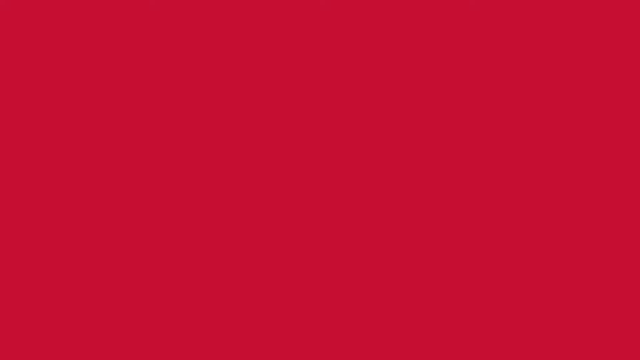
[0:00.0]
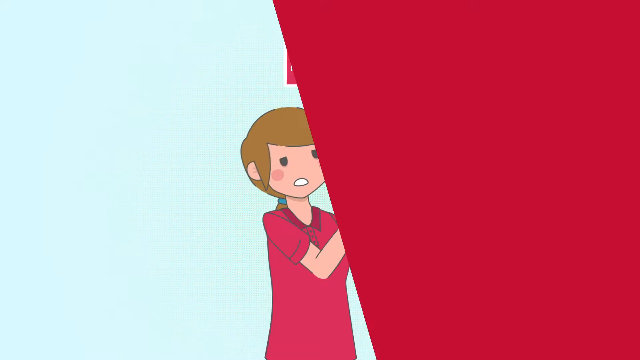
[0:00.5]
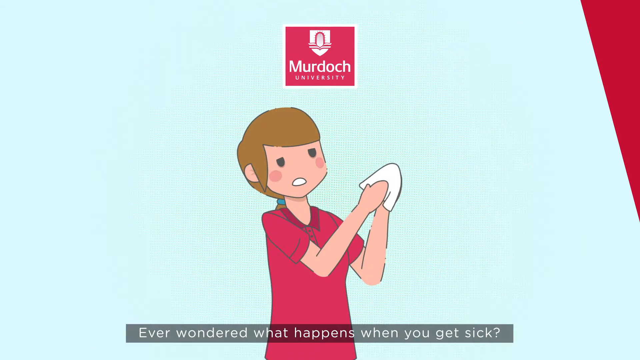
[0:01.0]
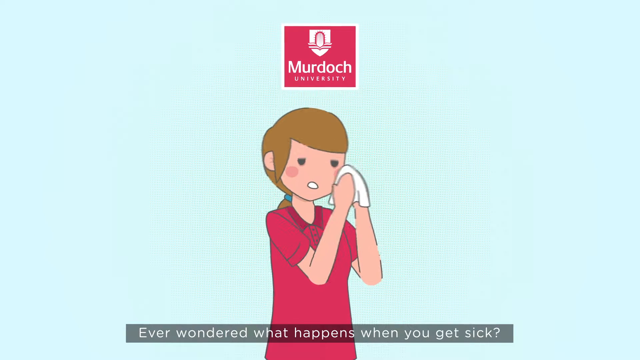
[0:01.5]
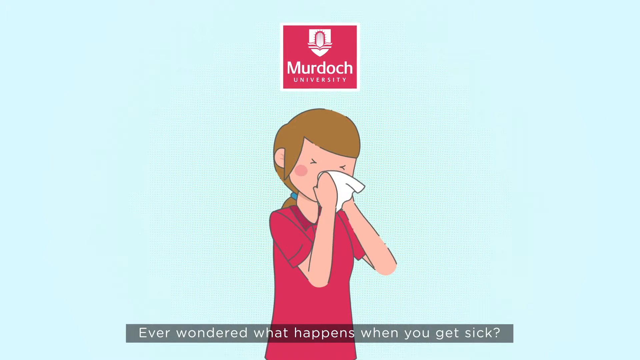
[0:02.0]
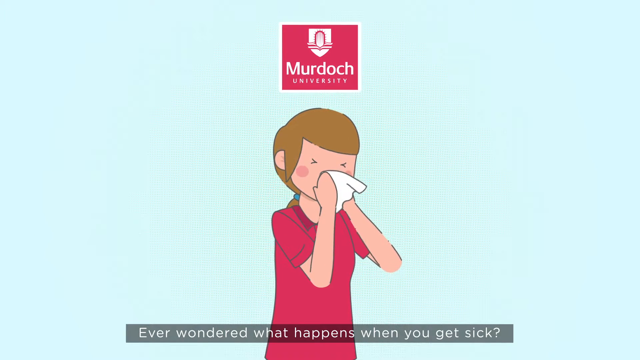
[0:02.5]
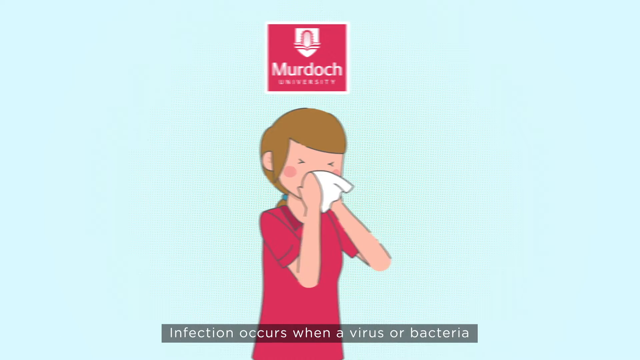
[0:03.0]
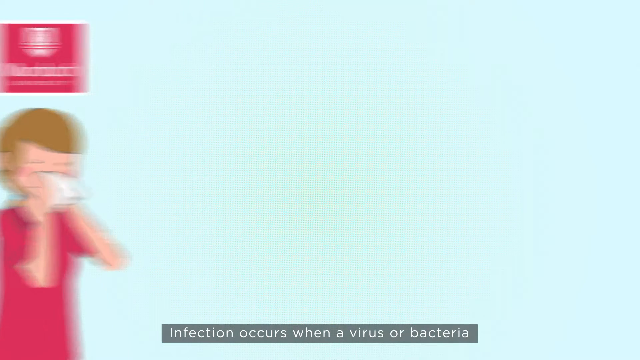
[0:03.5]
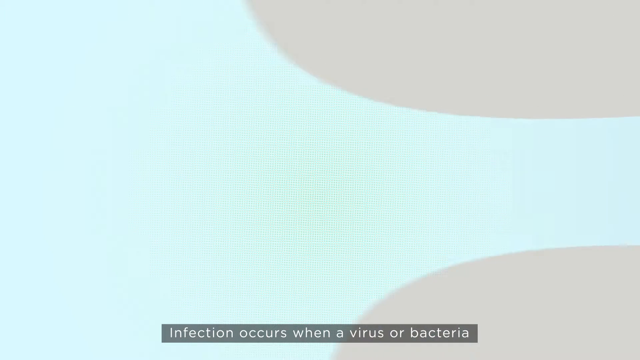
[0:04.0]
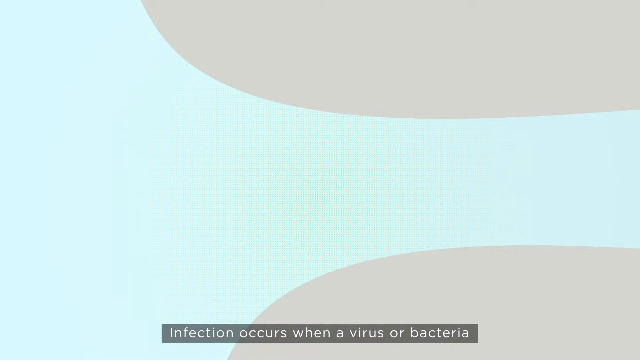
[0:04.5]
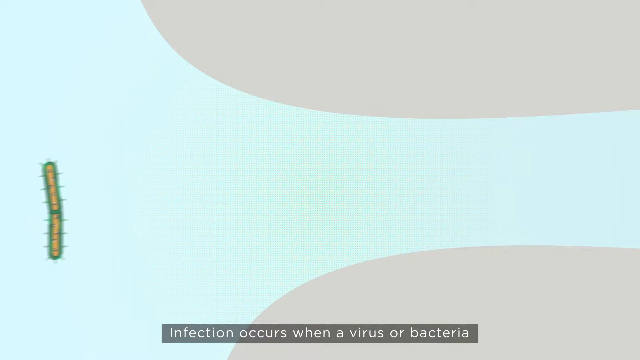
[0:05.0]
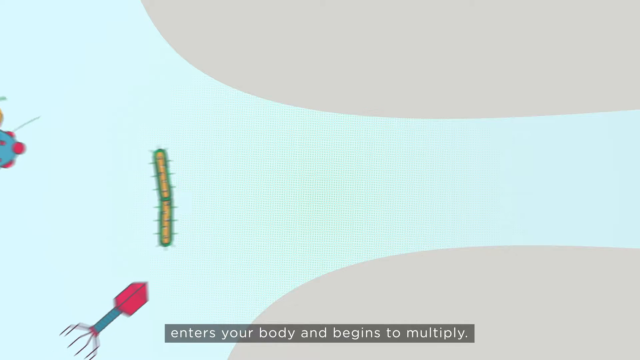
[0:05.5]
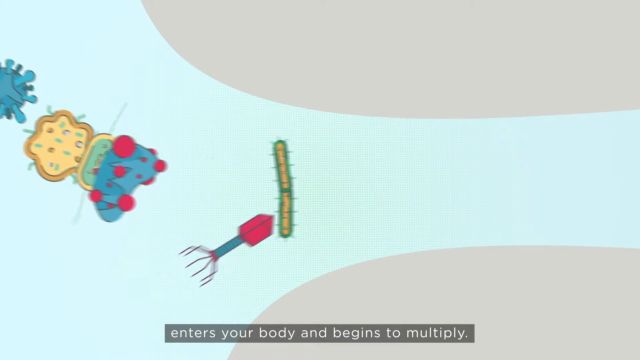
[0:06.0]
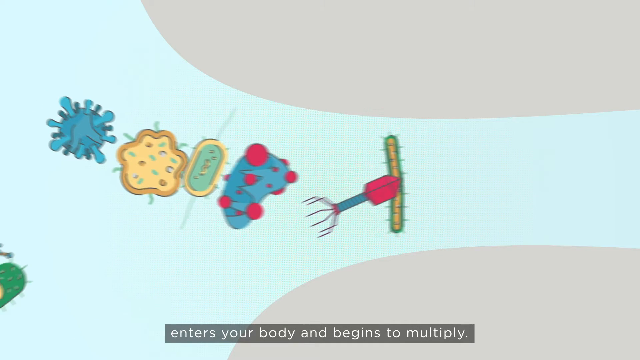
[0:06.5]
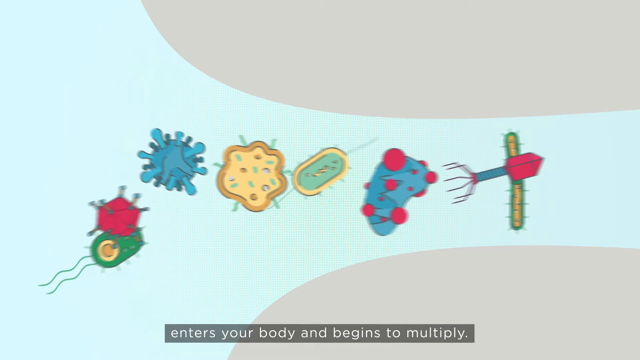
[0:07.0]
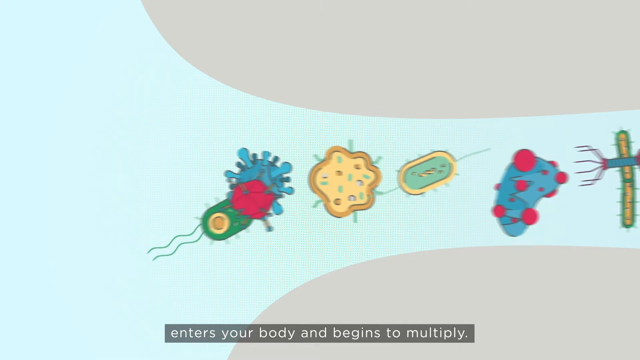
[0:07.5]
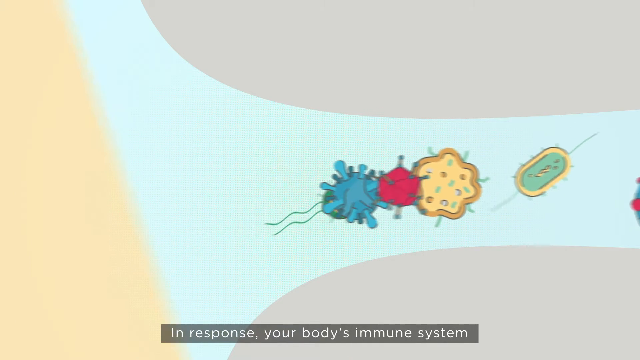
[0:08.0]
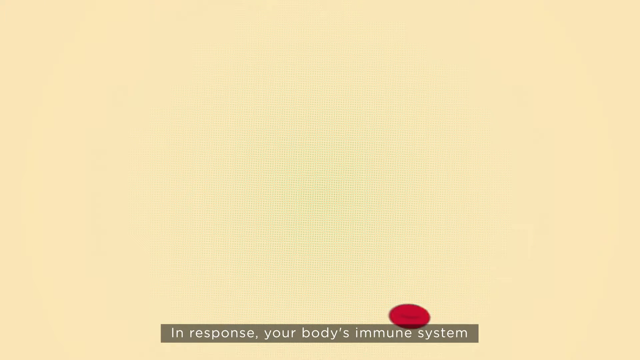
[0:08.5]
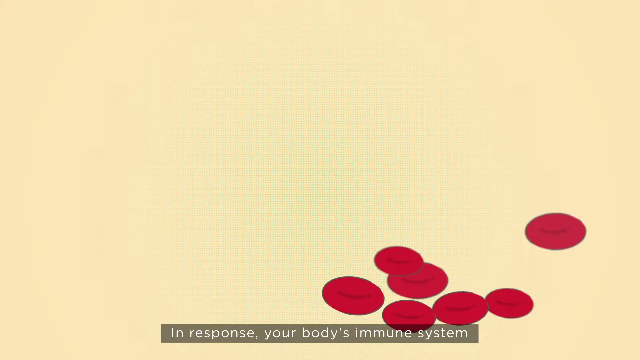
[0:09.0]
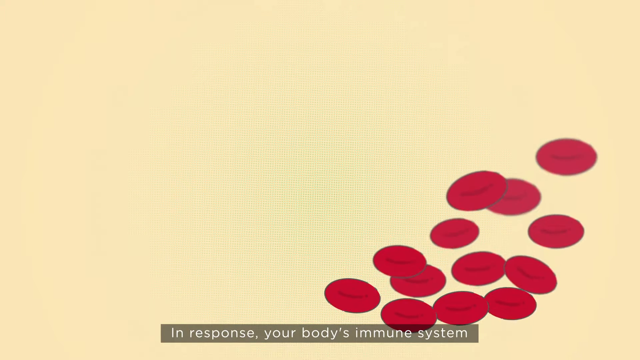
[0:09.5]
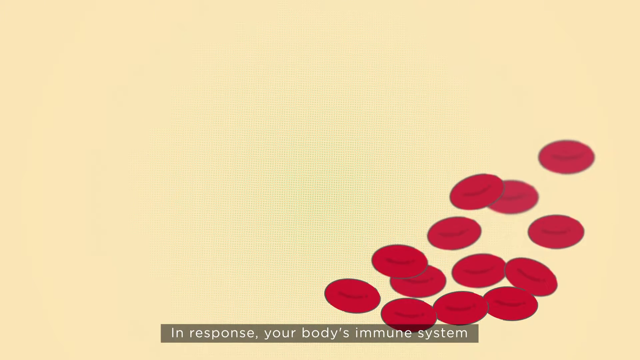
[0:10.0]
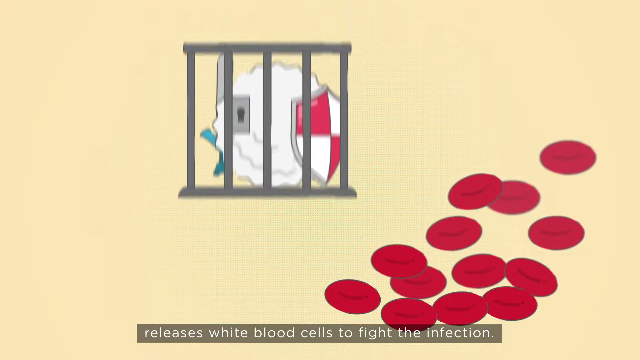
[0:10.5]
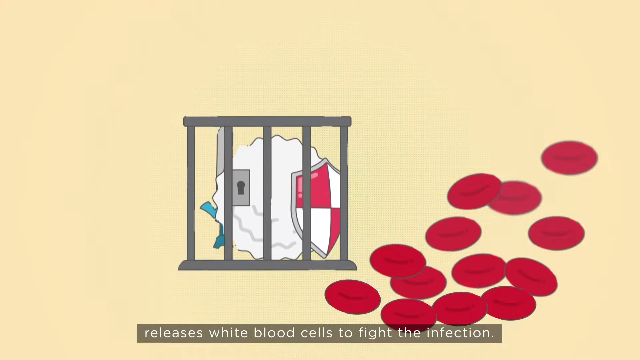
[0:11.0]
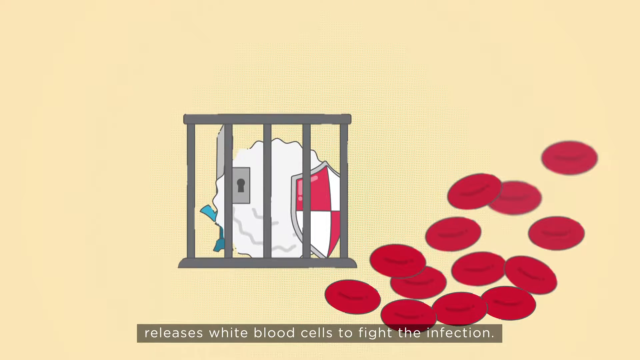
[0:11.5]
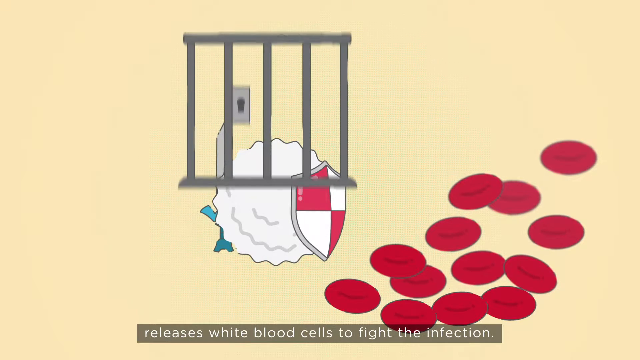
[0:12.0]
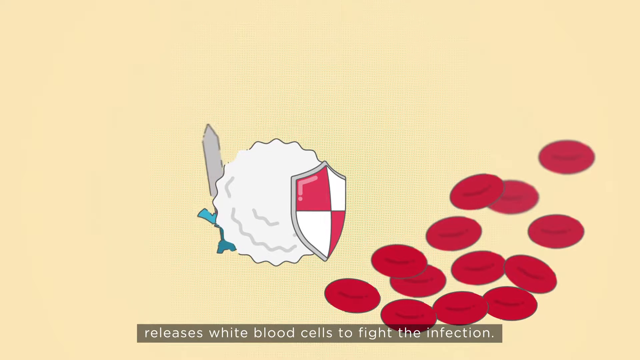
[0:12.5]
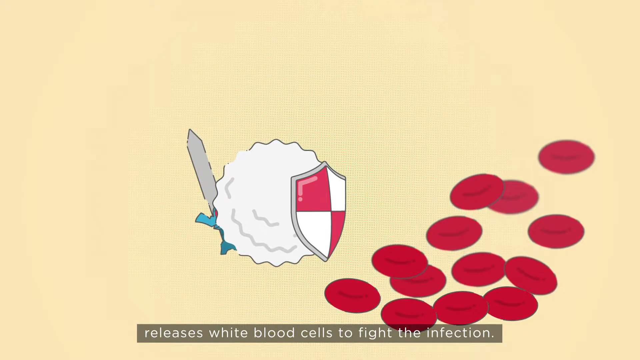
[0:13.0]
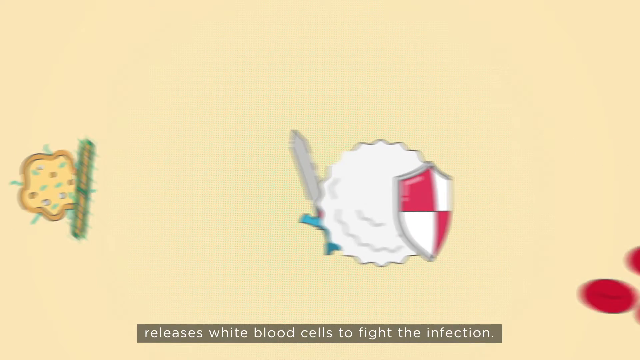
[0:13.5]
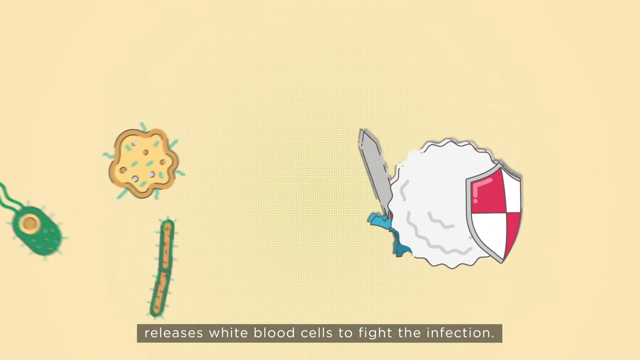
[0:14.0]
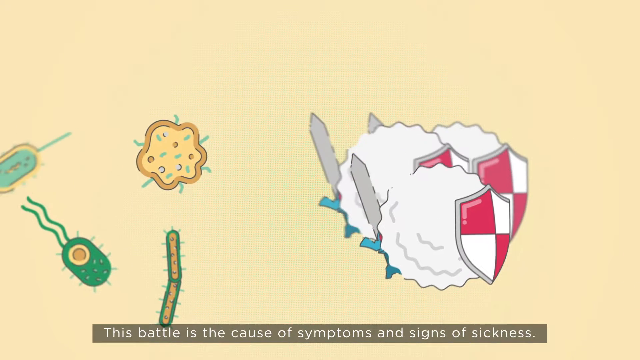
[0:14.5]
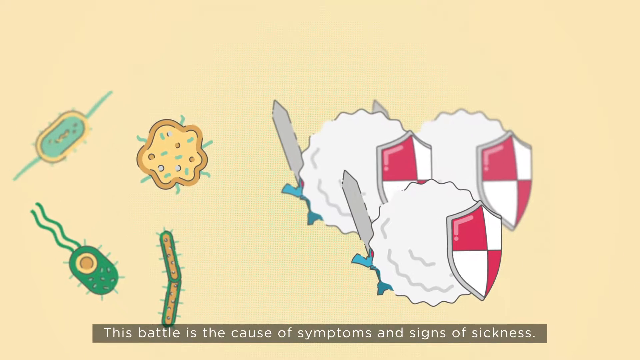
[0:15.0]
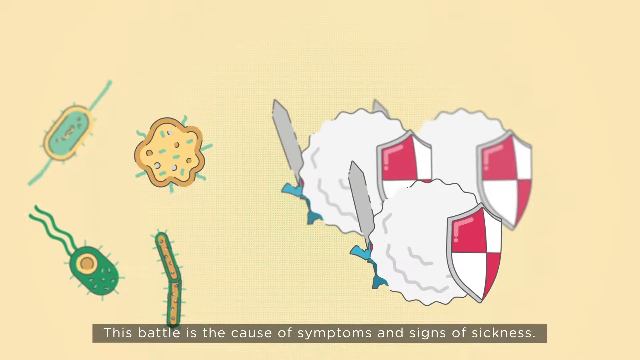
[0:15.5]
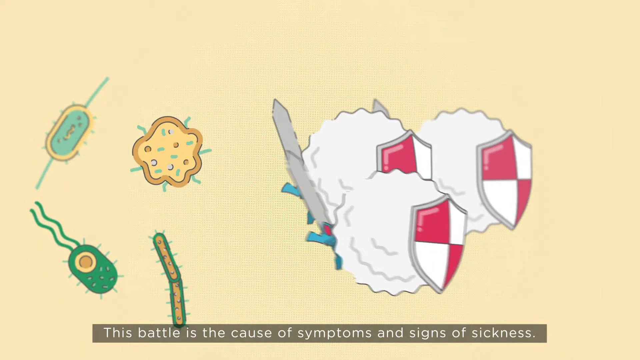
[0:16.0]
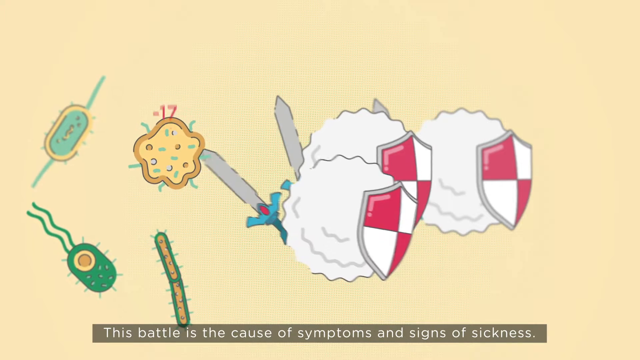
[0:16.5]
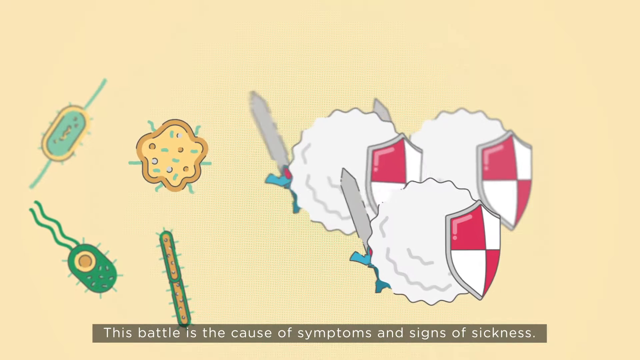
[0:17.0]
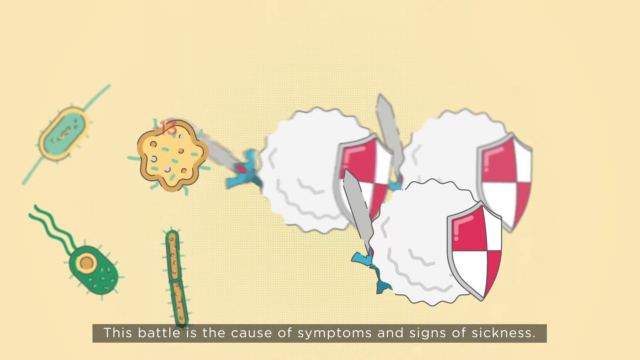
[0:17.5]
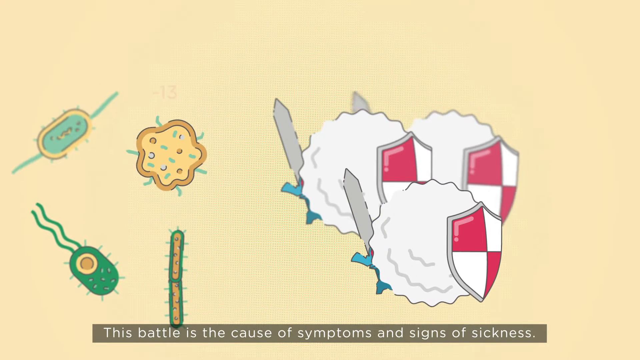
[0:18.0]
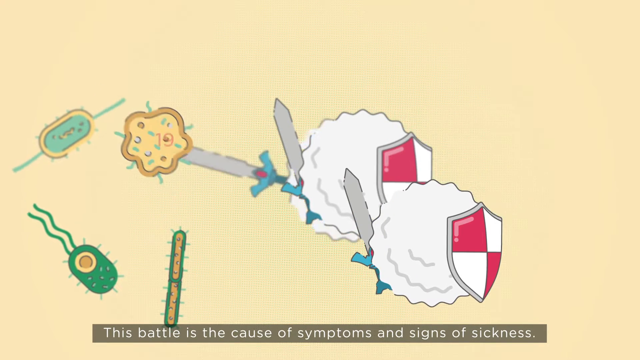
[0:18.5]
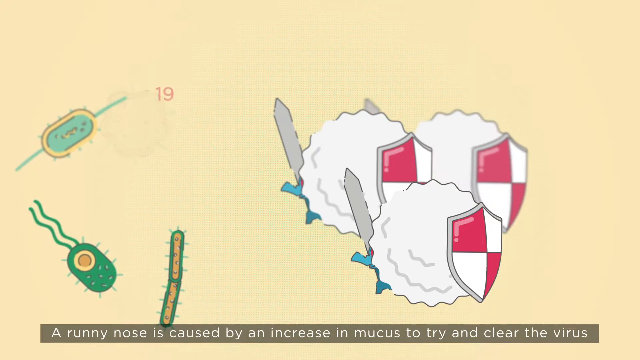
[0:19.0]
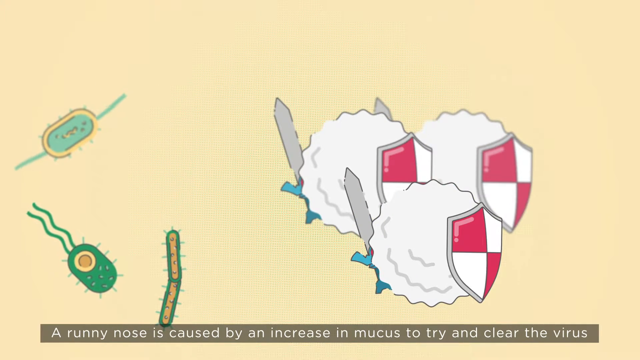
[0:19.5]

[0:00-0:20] An all-red screen wipes away to reveal an animation. "Murdoch University" is written at the top center of the screen, and below it is an animated woman with white skin and brown hair in a ponytail, wearing a red shirt, blowing her nose into a white tissue against a light blue background. The screen then changes to small animated bacteria, with writing indicating that they are entering the body, and they are shown moving through what looks like a canal. Next, the screen changes to a yellowish background where little animated red blood cells pop up, followed by animated white blood cells dressed as knights with swords and armor that float in to fight small animated bacteria that have entered the screen. The white blood cells fight and attack the bacteria, removing their health.